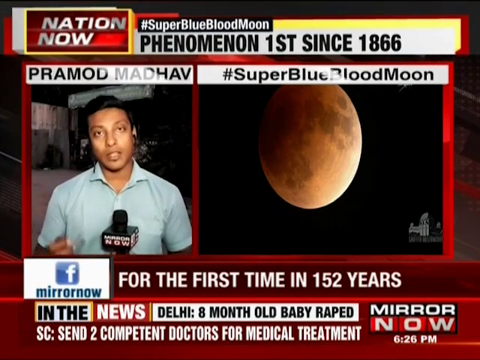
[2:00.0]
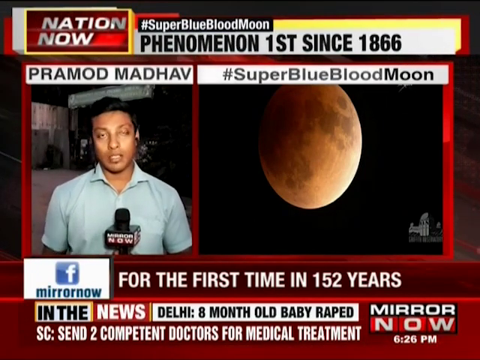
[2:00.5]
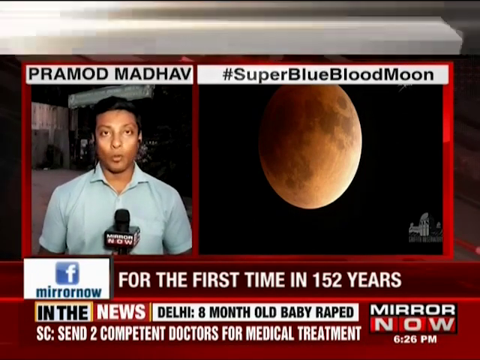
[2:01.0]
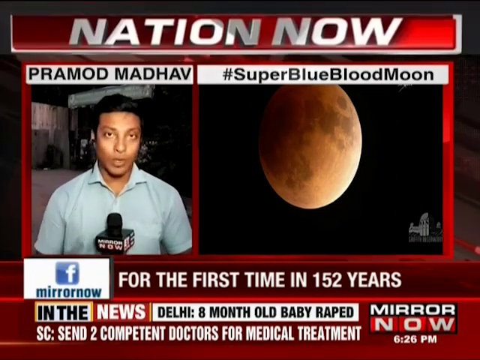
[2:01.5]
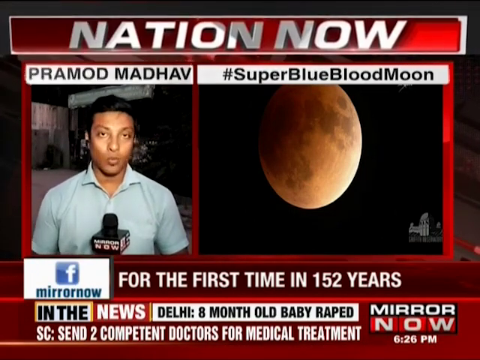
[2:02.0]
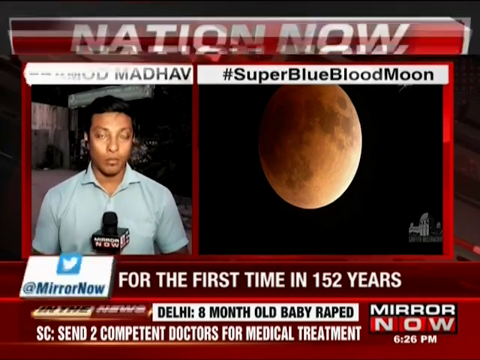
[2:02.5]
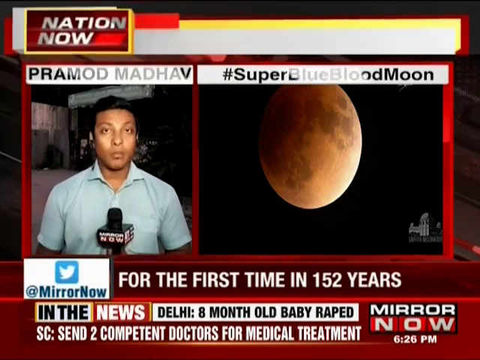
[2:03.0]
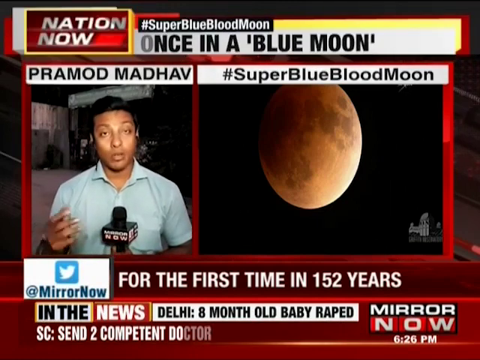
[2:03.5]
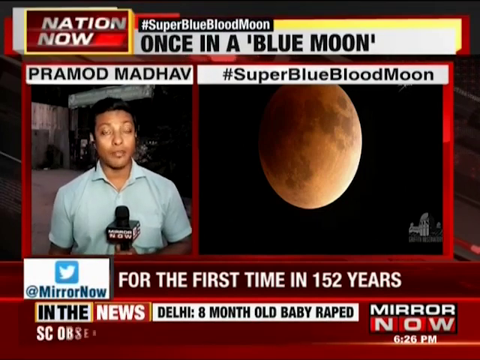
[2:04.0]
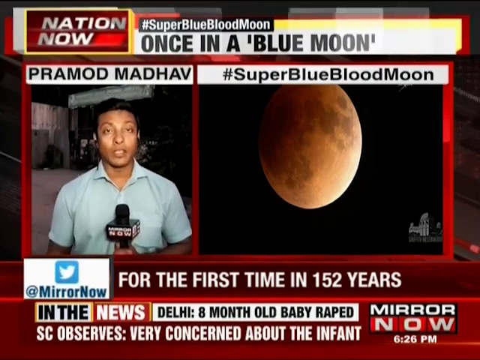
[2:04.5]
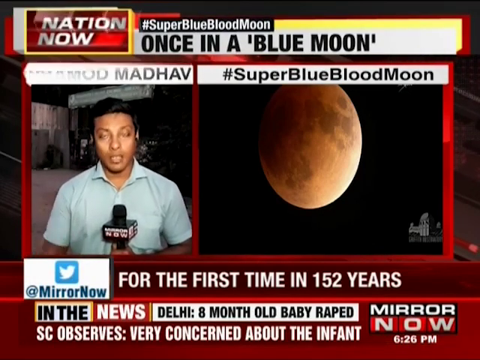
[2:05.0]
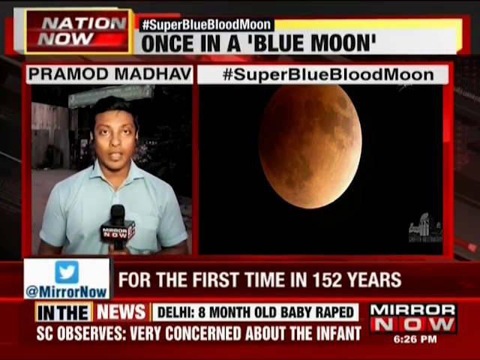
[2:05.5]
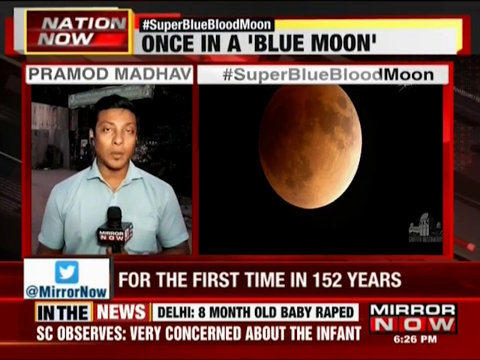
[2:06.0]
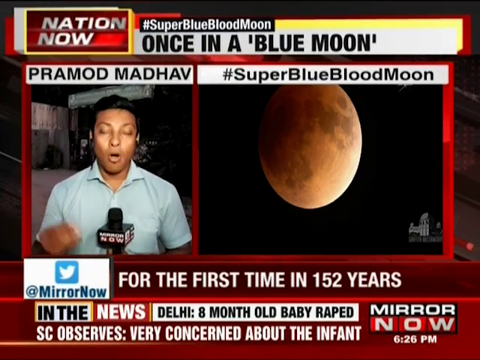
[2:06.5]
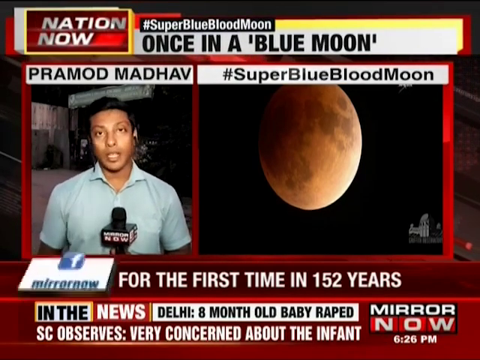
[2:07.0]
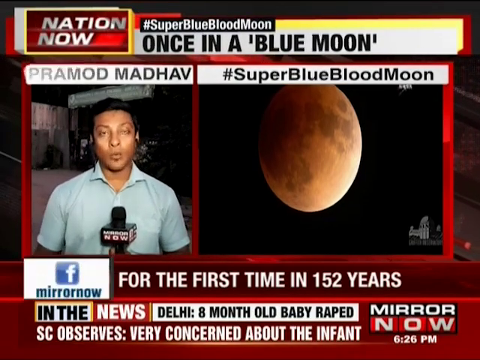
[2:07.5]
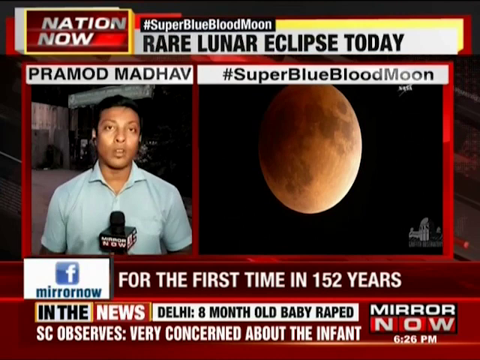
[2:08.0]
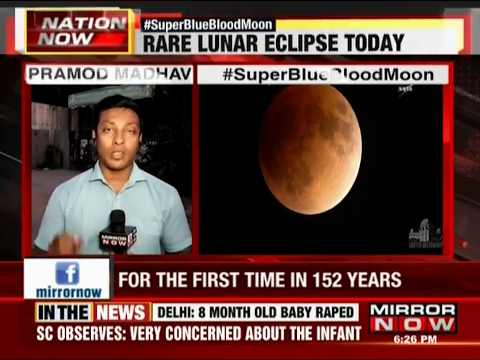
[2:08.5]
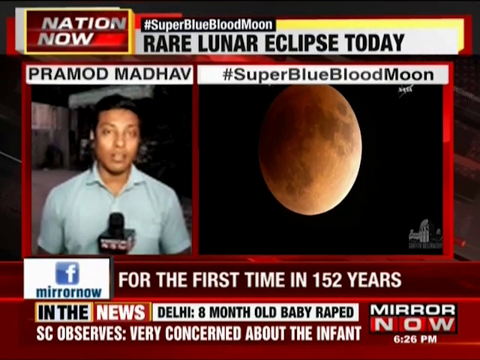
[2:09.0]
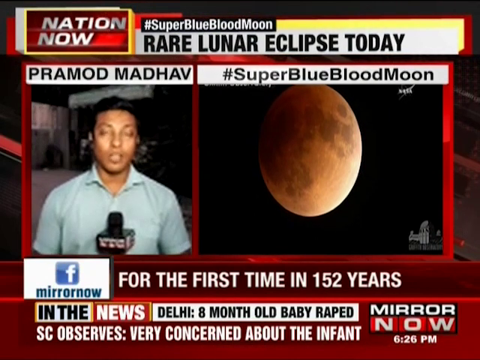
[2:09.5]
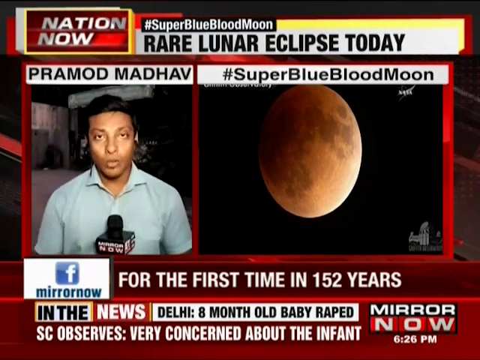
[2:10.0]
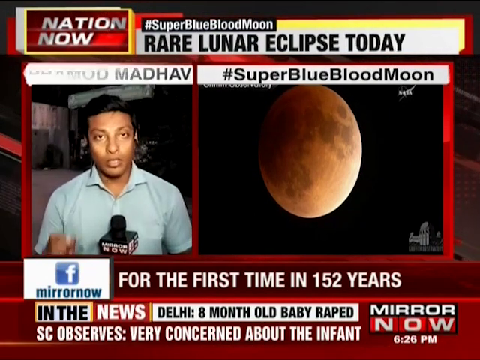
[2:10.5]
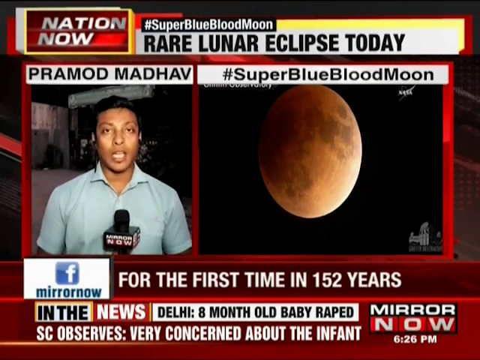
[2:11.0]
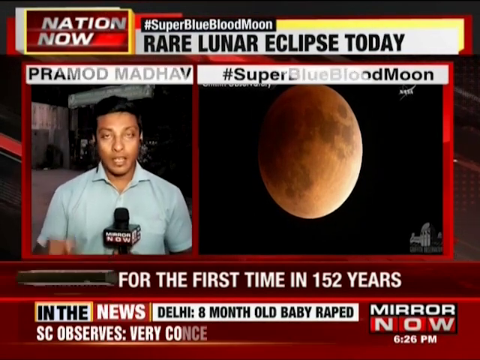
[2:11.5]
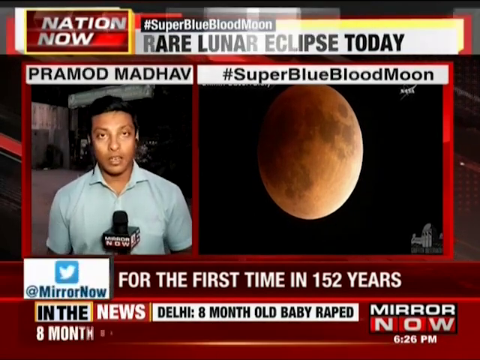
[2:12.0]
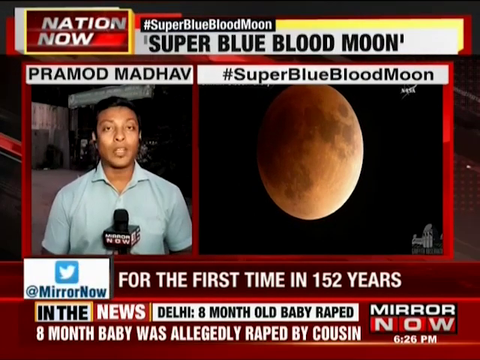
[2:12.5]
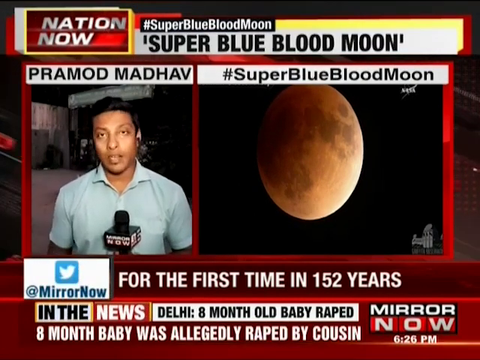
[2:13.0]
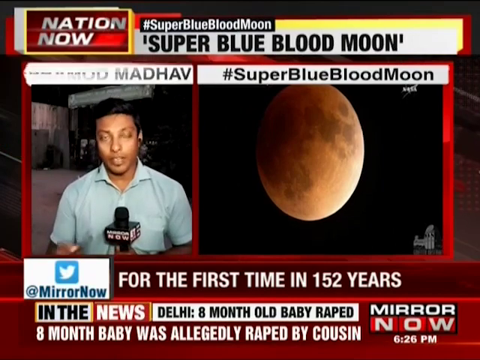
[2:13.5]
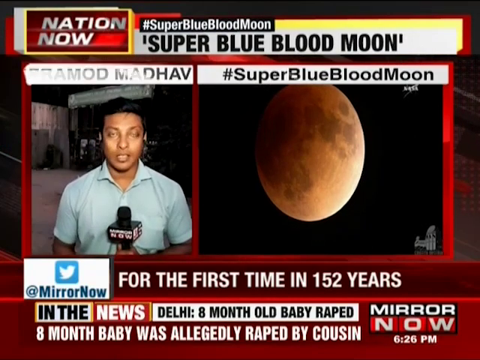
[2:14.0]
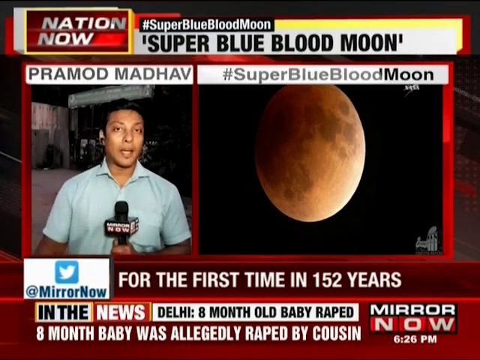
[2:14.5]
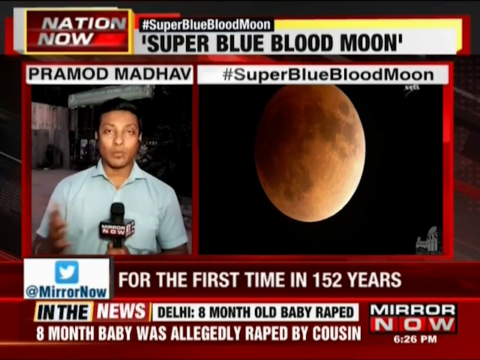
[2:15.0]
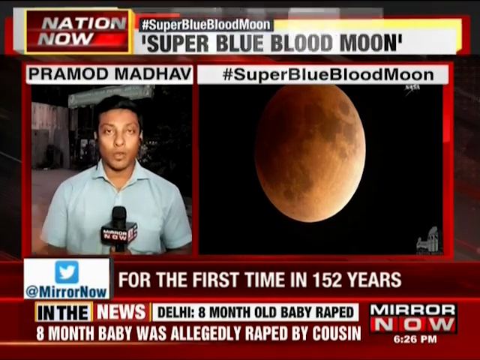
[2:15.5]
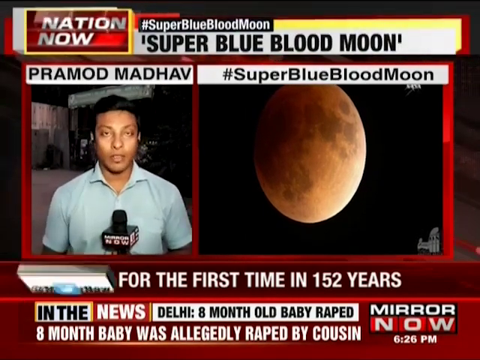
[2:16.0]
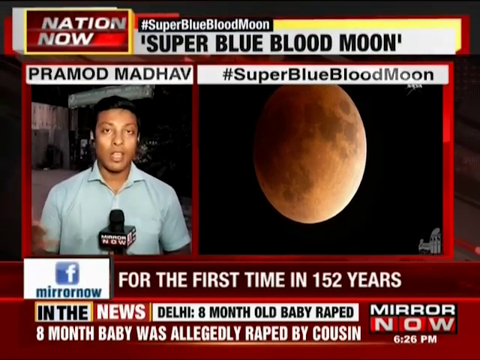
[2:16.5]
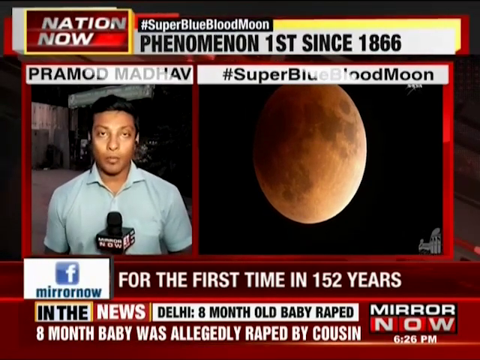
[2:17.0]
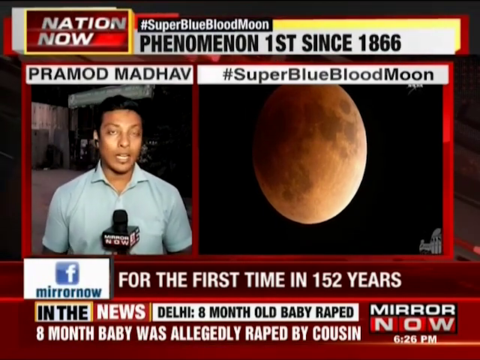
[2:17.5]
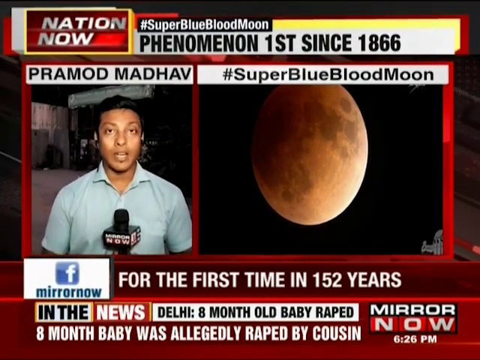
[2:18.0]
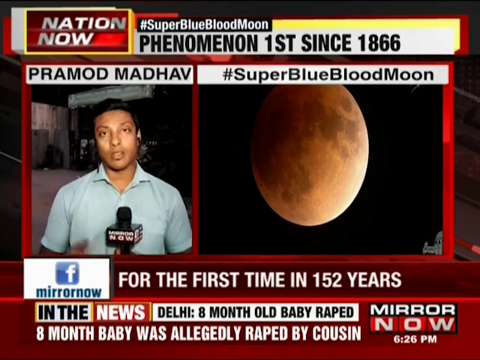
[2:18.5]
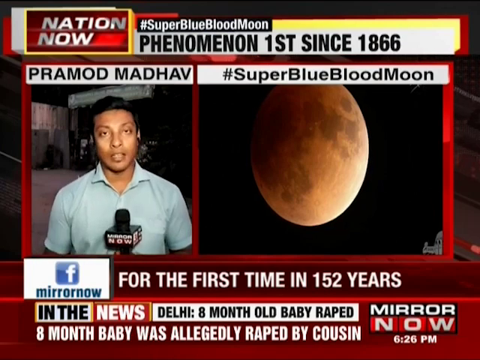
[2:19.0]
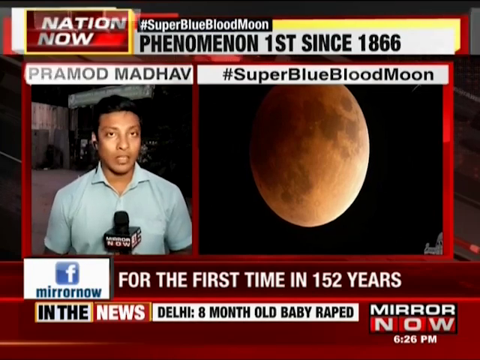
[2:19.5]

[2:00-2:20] The man, named Pramod Madhav, discusses the super blue blood moon. Information shown includes the super blue blood moon phenomenon first since 1866, super moon, super blue blood moon for the first time in 152 years. Then a Mirror Now news item from Delhi appears about an 8-month-old baby who was raped, allegedly by a cousin.